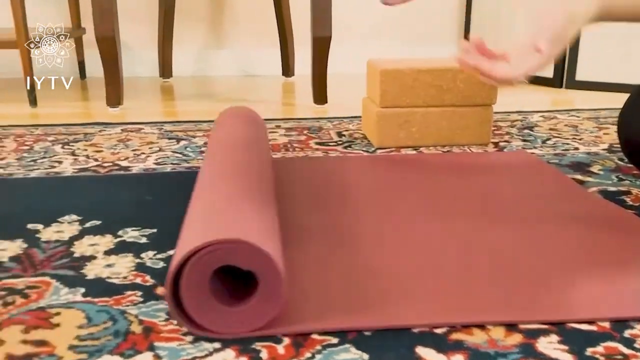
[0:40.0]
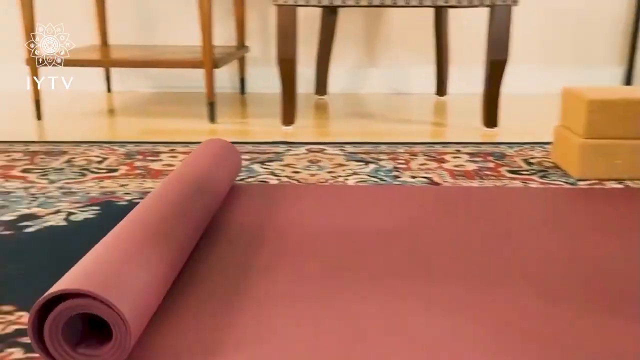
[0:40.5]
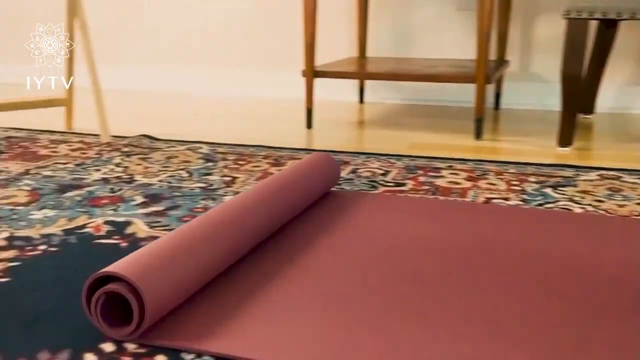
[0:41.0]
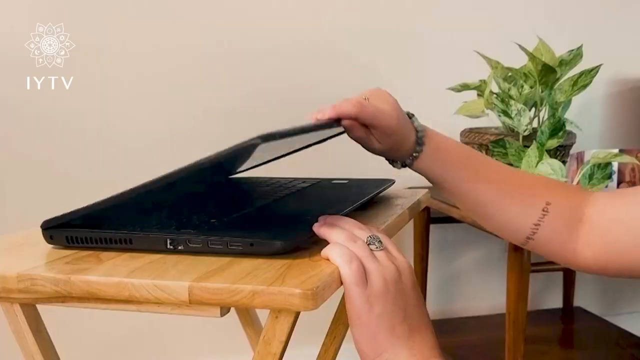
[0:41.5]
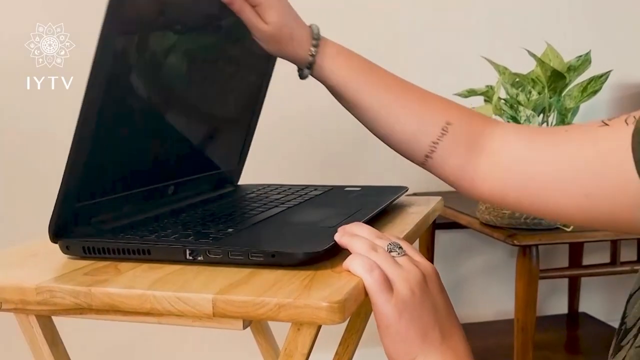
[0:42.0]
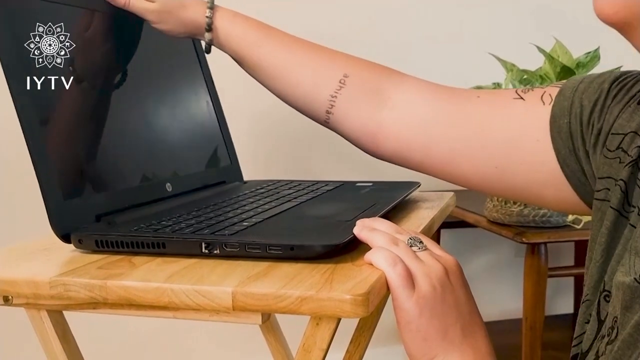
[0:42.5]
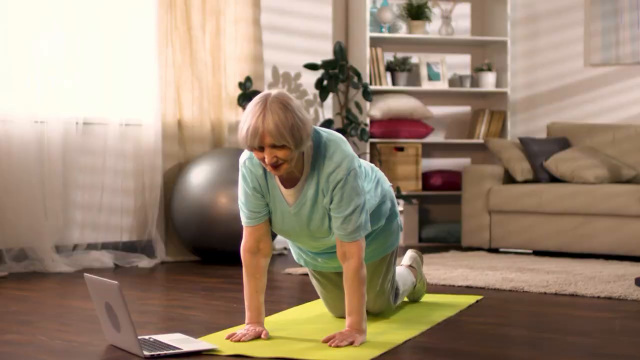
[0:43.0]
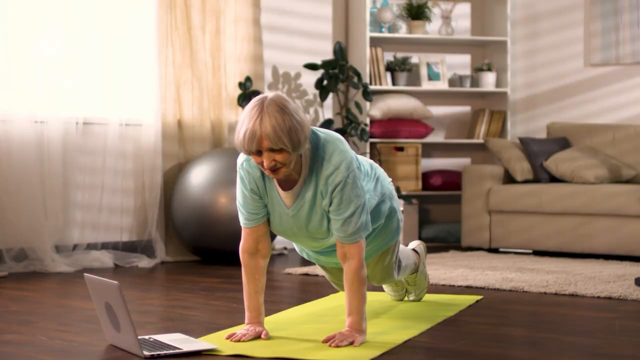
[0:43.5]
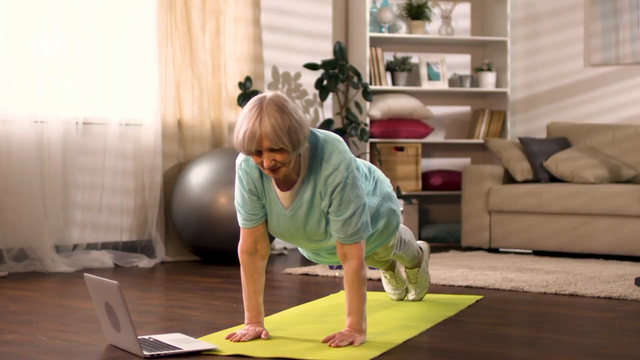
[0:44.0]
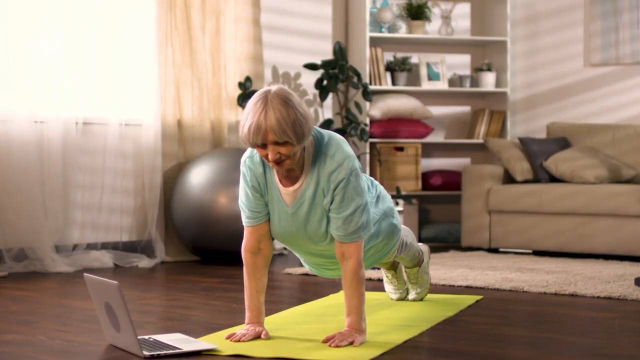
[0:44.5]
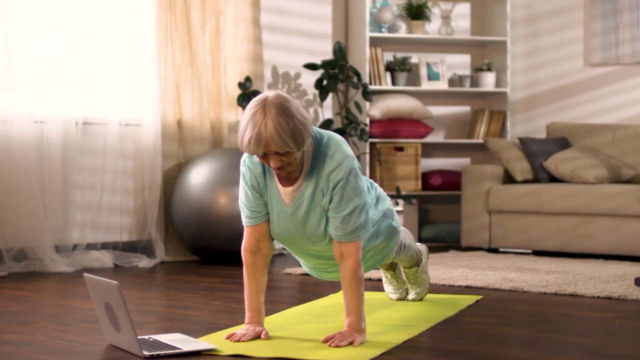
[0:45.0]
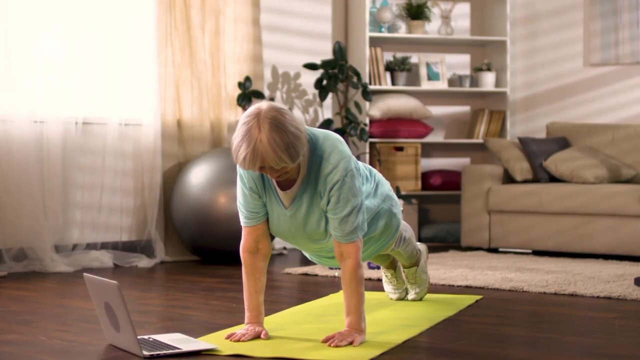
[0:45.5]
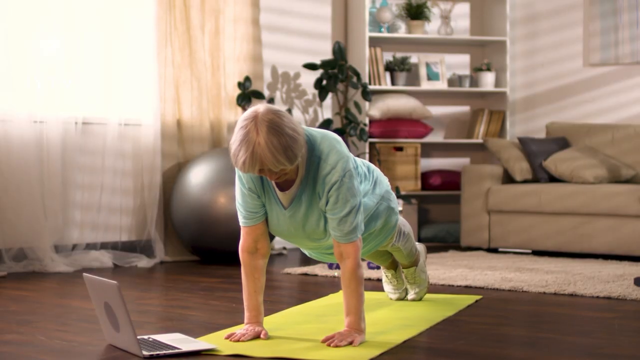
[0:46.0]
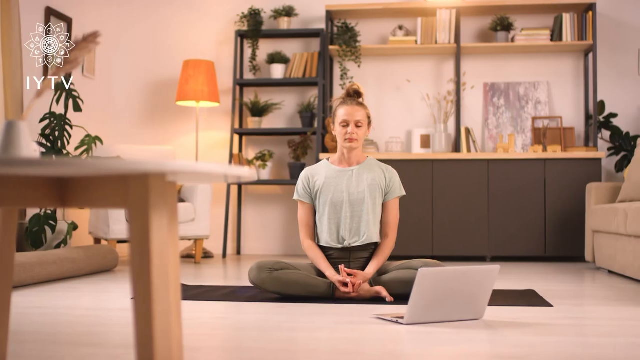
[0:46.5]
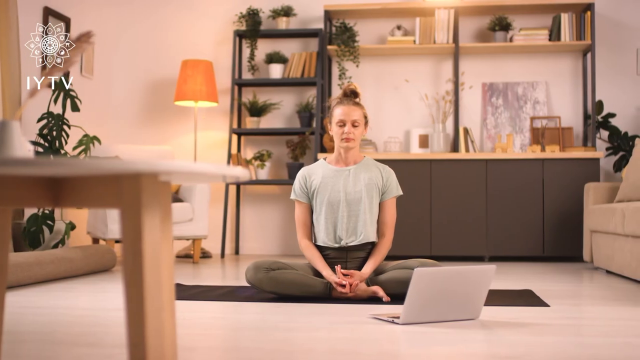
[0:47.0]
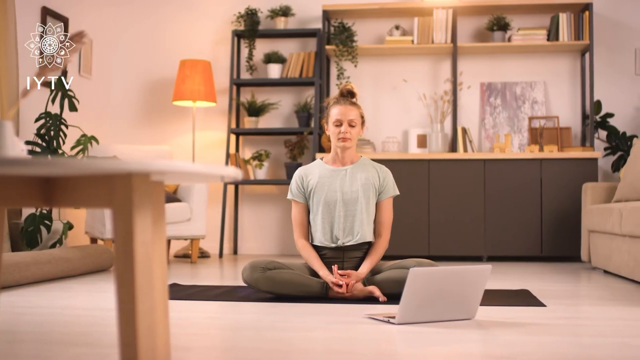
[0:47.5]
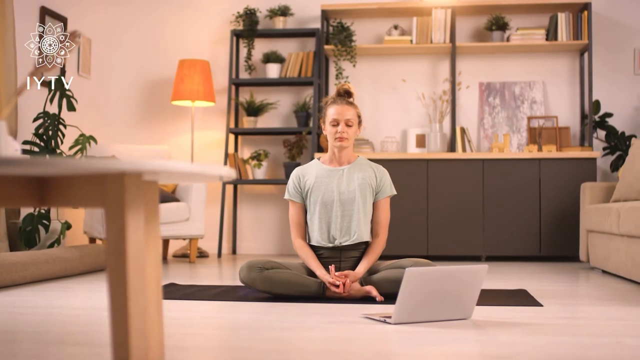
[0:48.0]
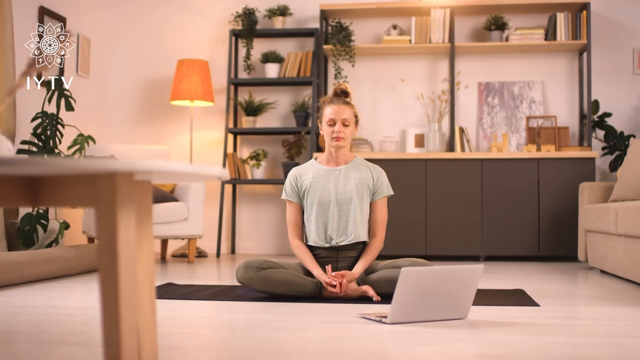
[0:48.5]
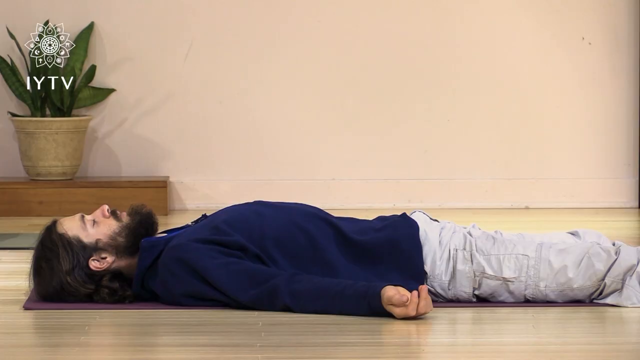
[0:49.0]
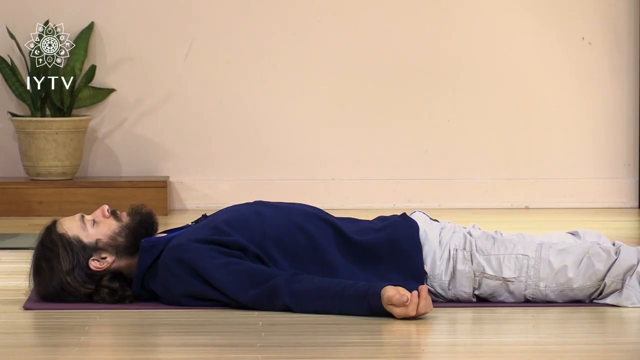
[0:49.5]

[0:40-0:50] Someone rolls a yoga mat out on a floor with a rug in what looks like some kind of studio, with two bricks next to the mat on the rug. Someone opens up their computer. An older lady, apparently in her 60s to 70s, is on the floor doing yoga. Another young lady, apparently in her late 20s or early 30s, does yoga in her living room with her computer in front of her. A man lays down in his living room with his hands at his sides, taking a break and doing his yoga quietly.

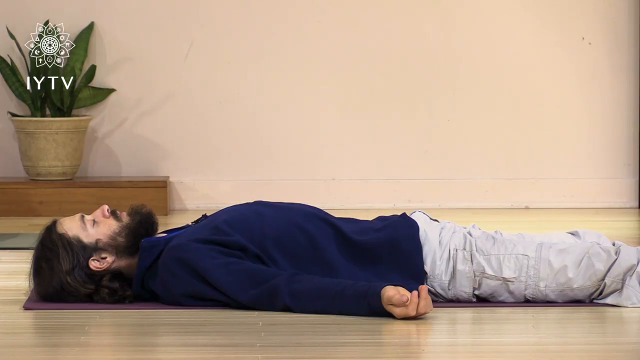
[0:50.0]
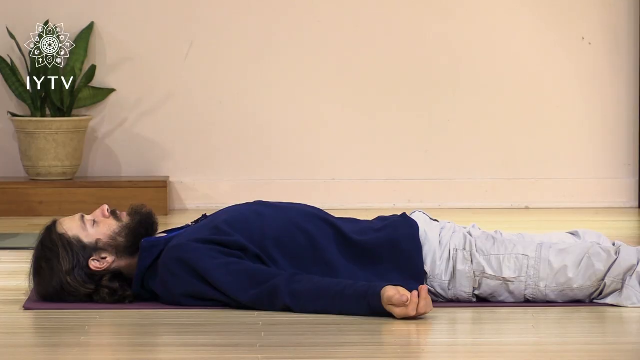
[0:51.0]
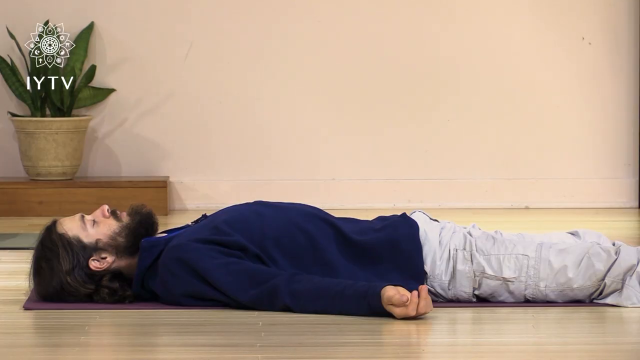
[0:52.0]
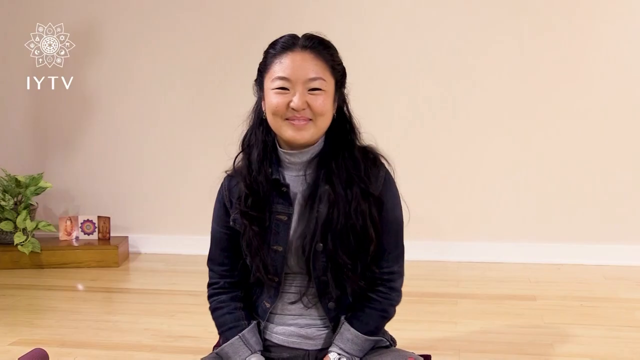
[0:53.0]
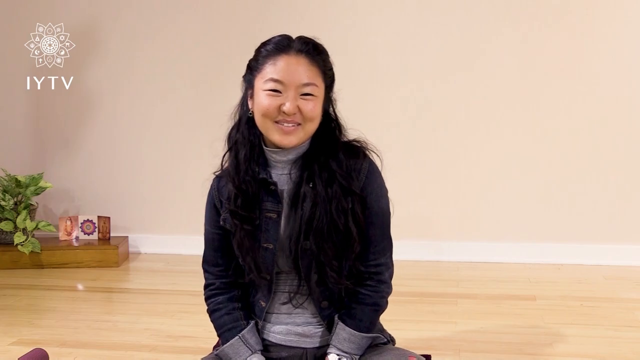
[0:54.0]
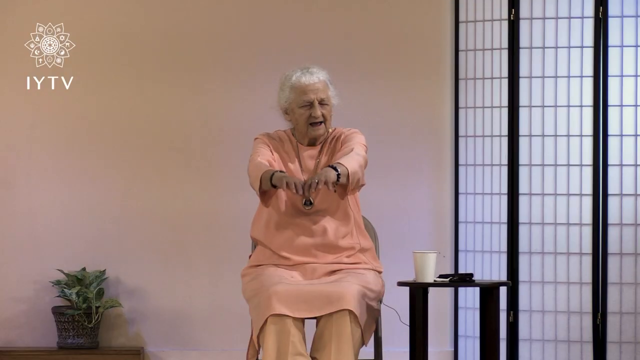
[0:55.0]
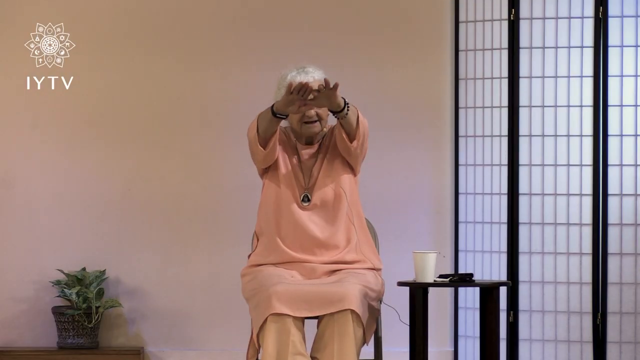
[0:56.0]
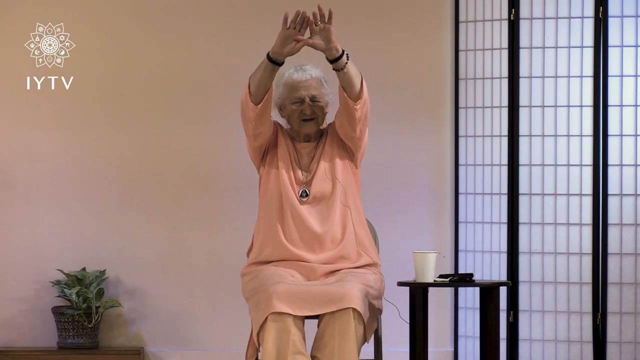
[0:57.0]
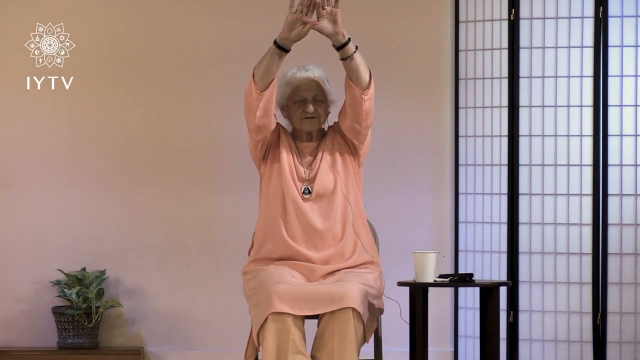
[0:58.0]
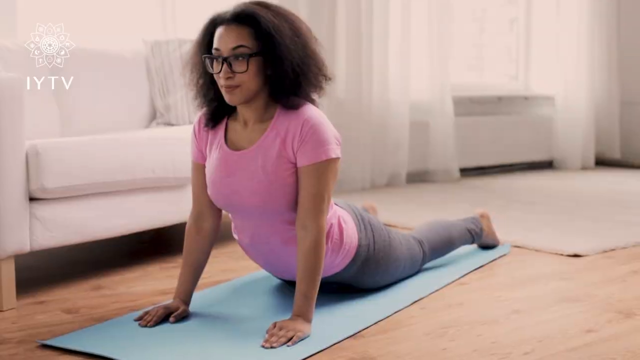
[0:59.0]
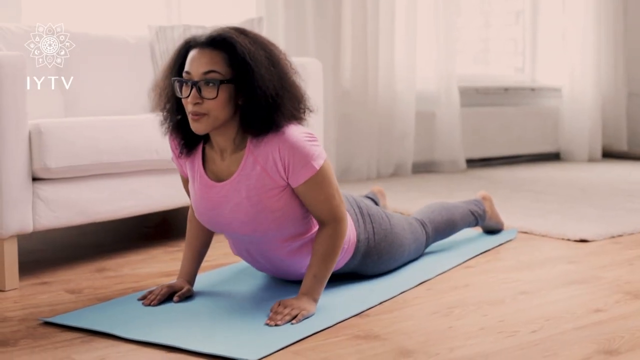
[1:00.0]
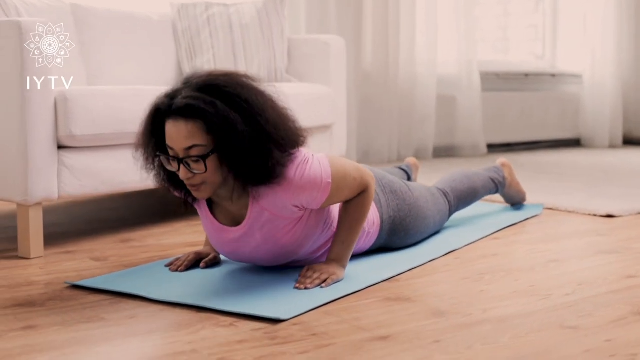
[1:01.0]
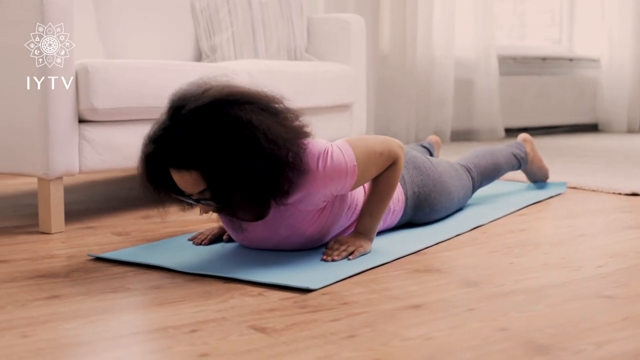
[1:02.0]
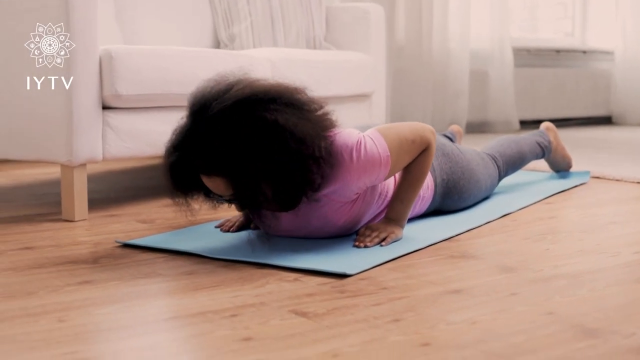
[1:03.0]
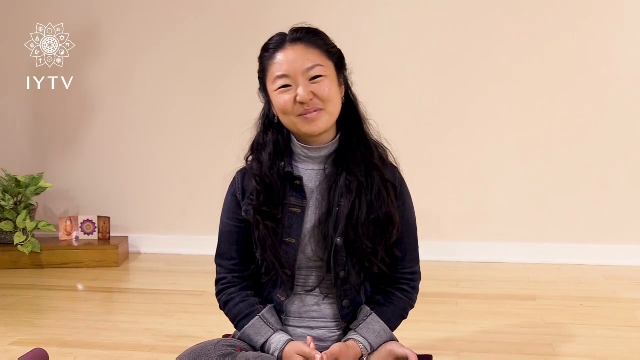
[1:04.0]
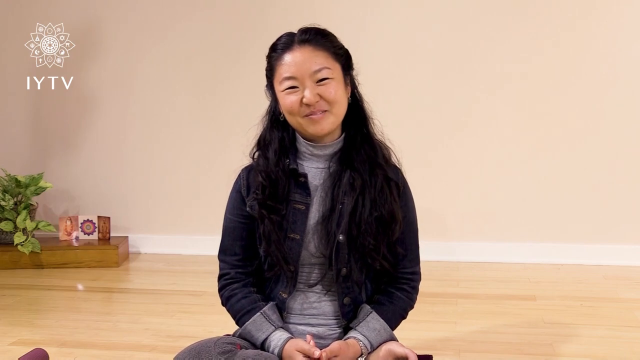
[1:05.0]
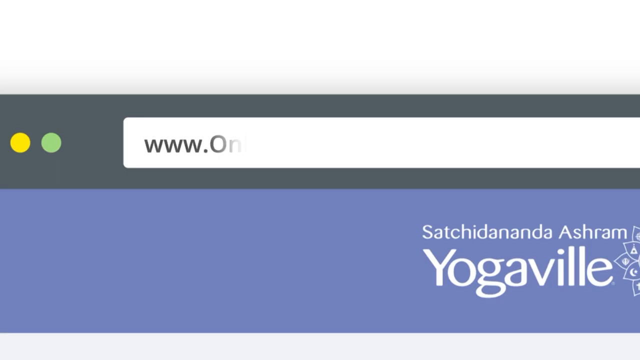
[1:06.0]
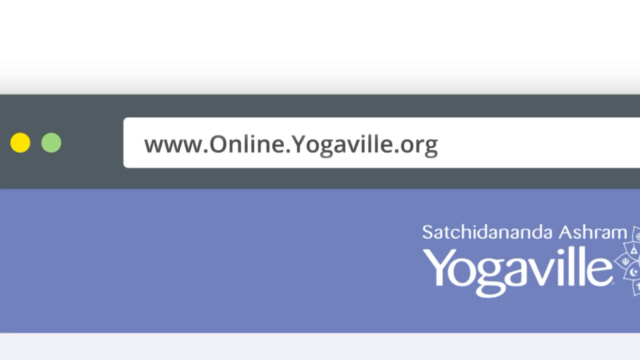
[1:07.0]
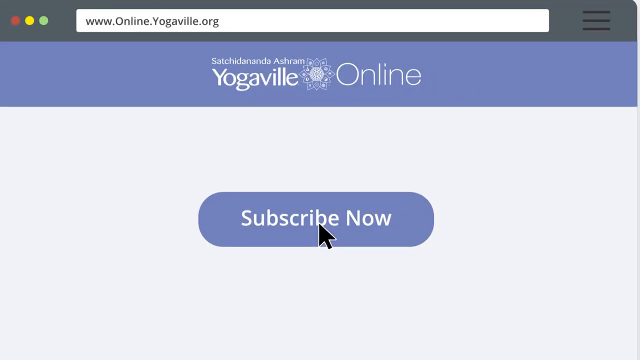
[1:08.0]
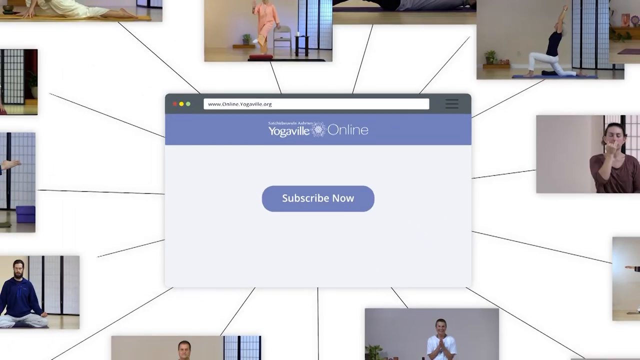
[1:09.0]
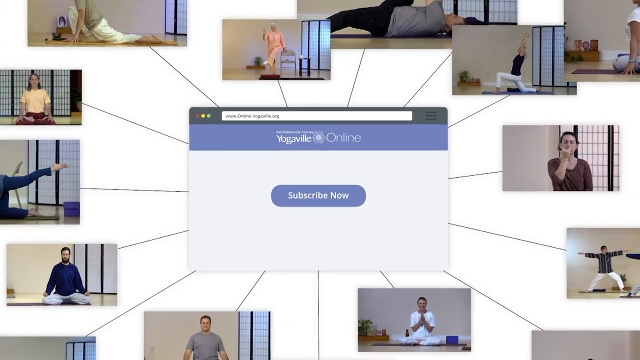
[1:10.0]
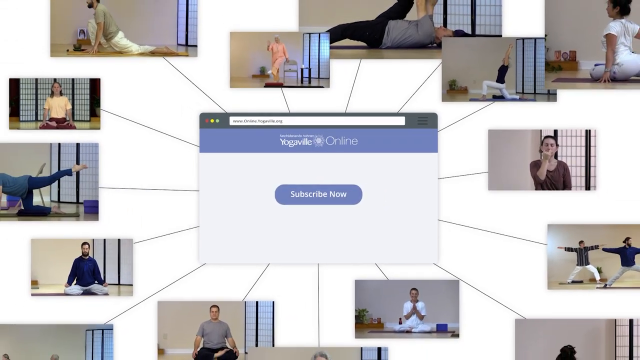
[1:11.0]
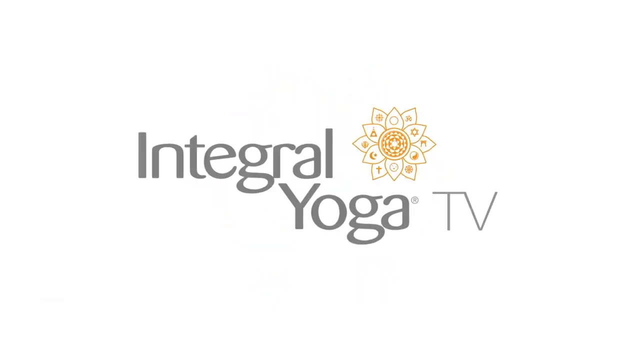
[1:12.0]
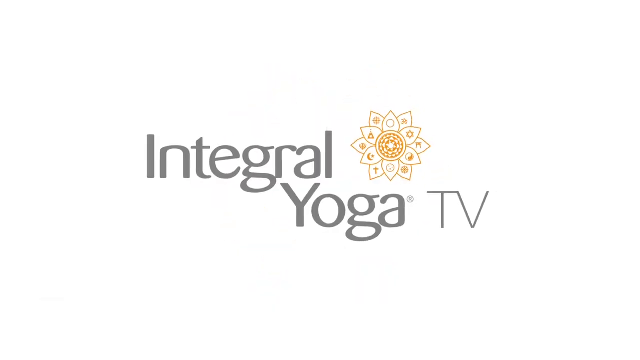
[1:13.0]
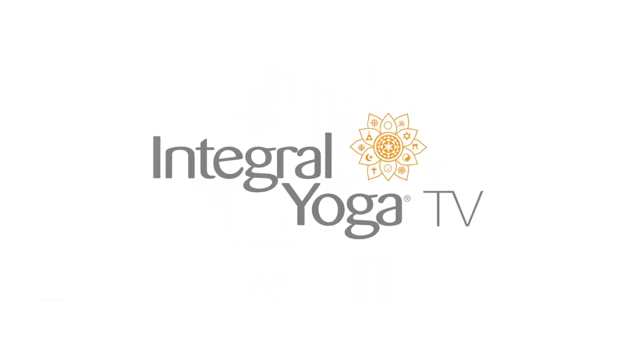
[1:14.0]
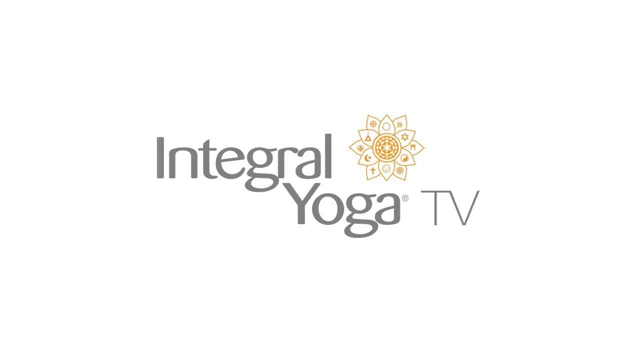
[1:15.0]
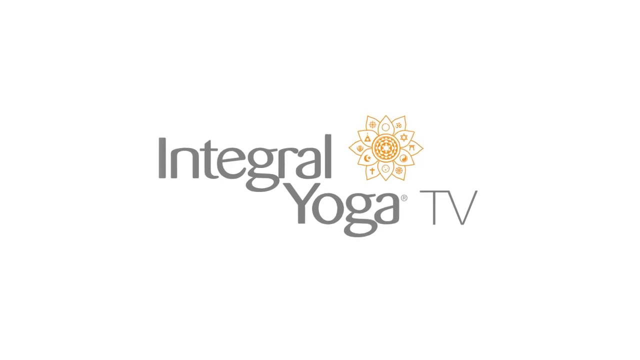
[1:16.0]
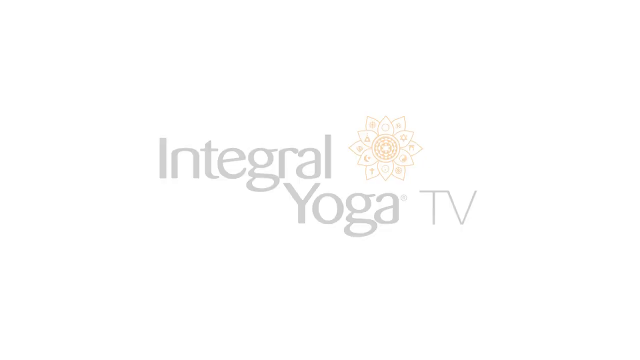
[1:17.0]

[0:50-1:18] In a yoga studio, a man of about 30 to 35 wearing a jacket and khaki pants lays on the ground, apparently doing yoga meditation. A young Asian woman, probably between 25 and 30 years old, speaks to the camera and smiles. An older lady, probably close to 70 or 80 years old, lifts her hands above her head. The Asian woman appears again, smiling, and shows the web address "www.onlineatyogaville.org" along with "subscribe now". This is some type of online yoga studio, and the different branches of yoga classes available are shown. The flower appears again with the yoga studio TV title.